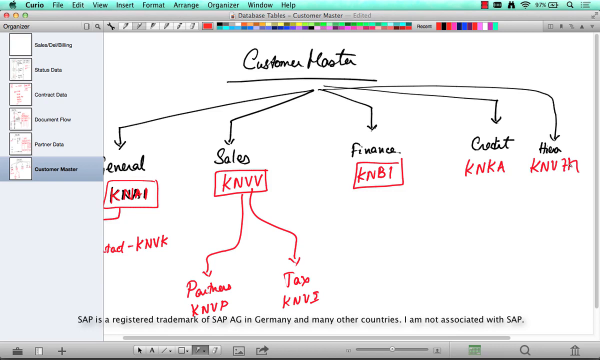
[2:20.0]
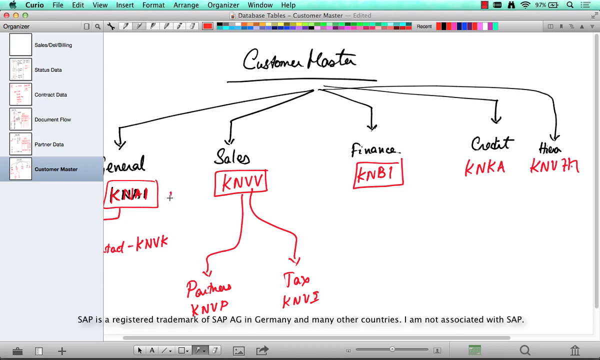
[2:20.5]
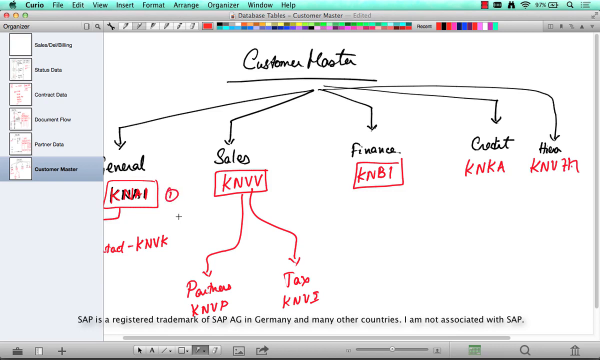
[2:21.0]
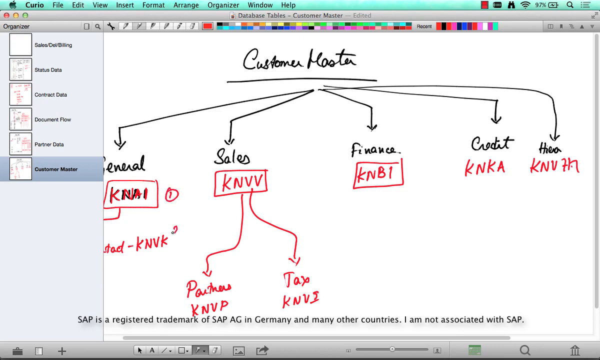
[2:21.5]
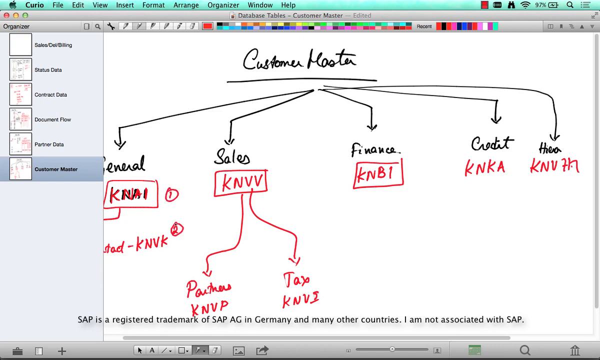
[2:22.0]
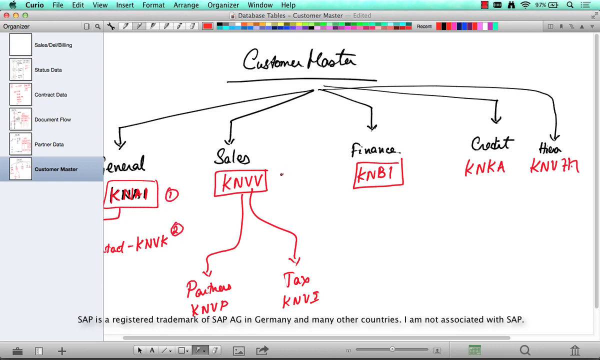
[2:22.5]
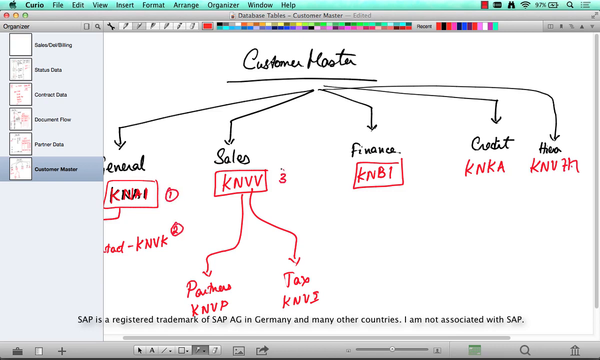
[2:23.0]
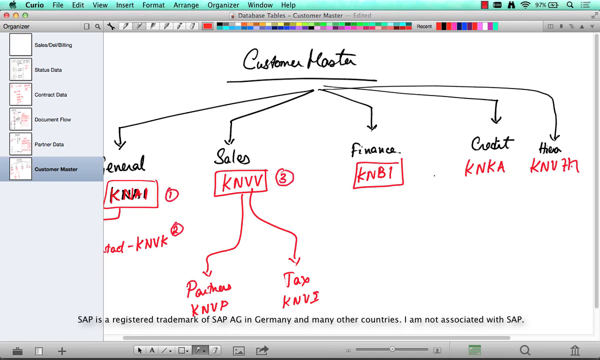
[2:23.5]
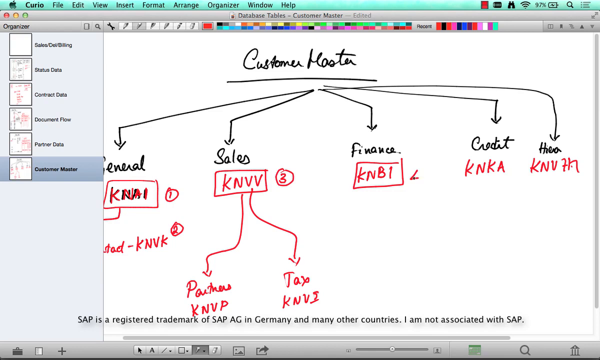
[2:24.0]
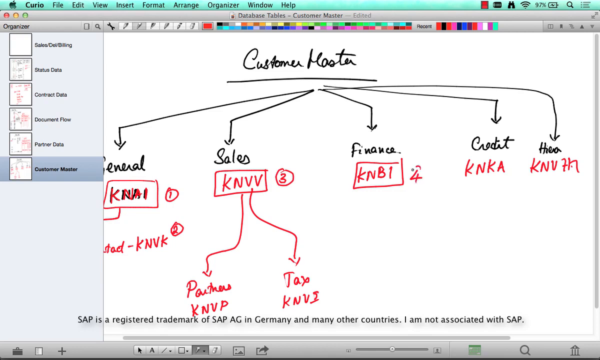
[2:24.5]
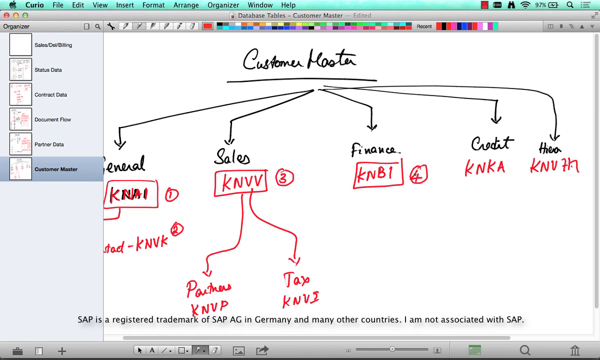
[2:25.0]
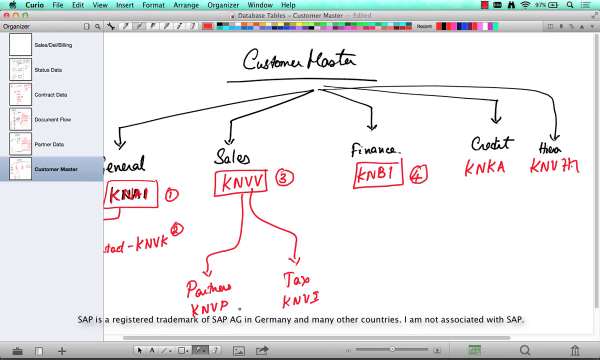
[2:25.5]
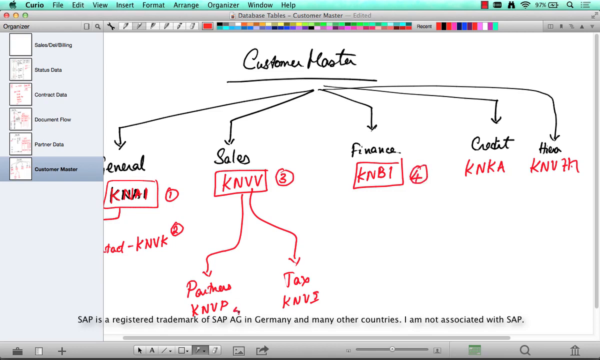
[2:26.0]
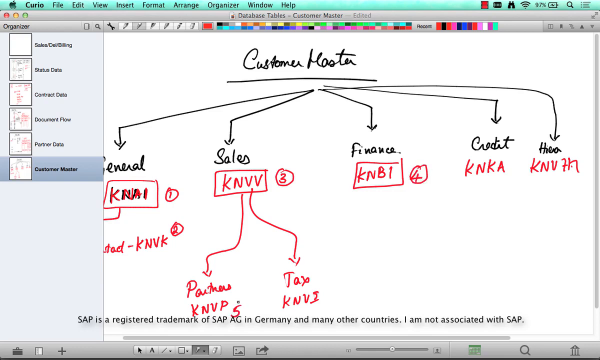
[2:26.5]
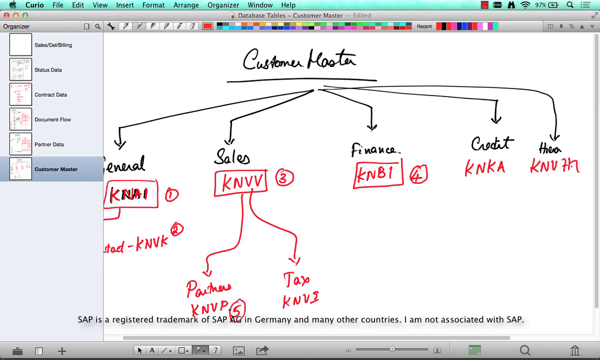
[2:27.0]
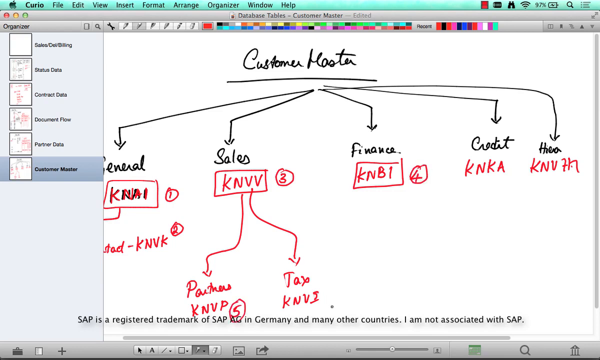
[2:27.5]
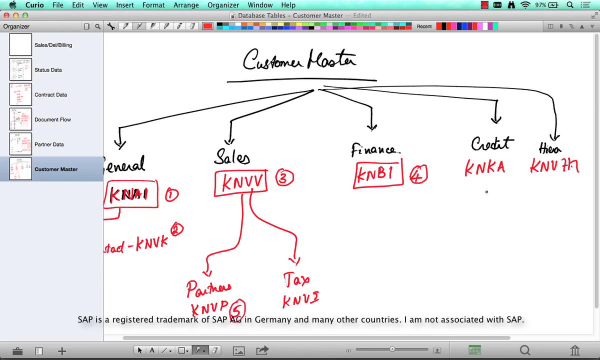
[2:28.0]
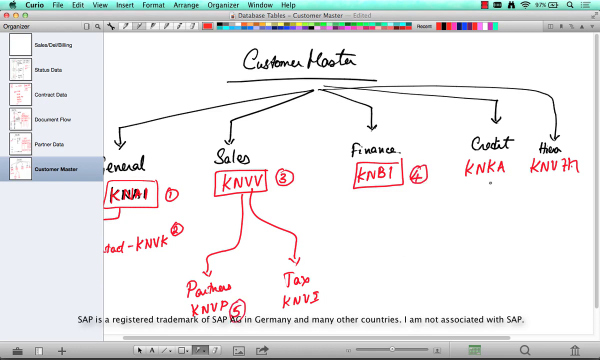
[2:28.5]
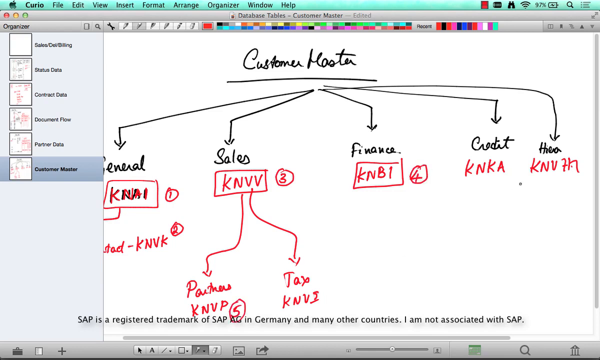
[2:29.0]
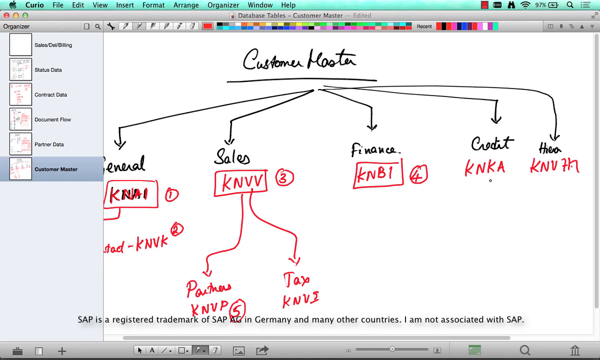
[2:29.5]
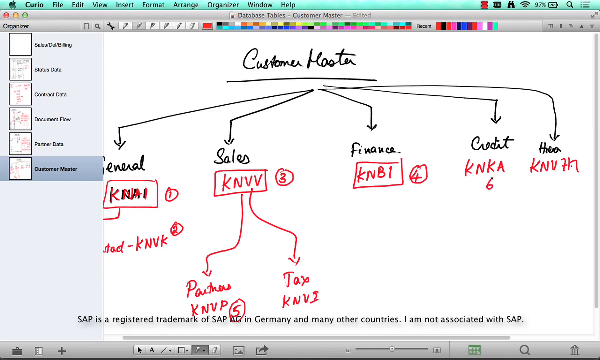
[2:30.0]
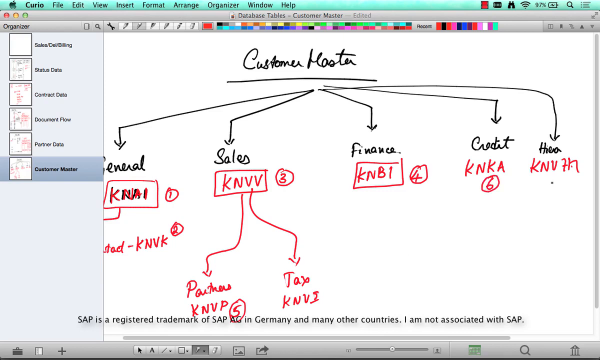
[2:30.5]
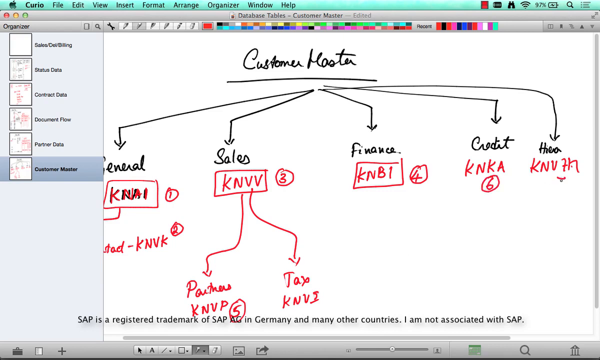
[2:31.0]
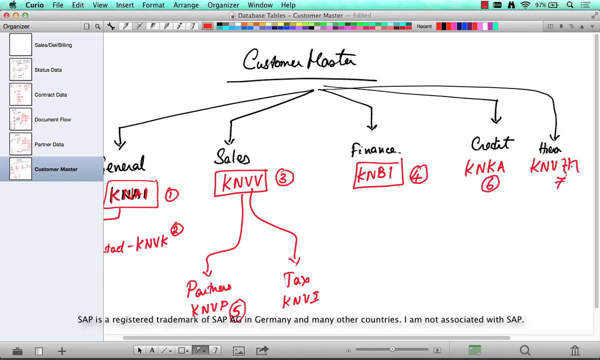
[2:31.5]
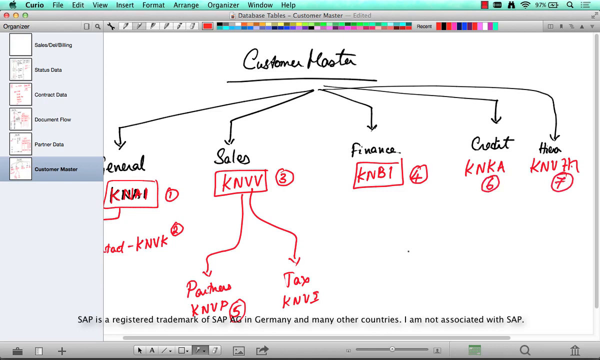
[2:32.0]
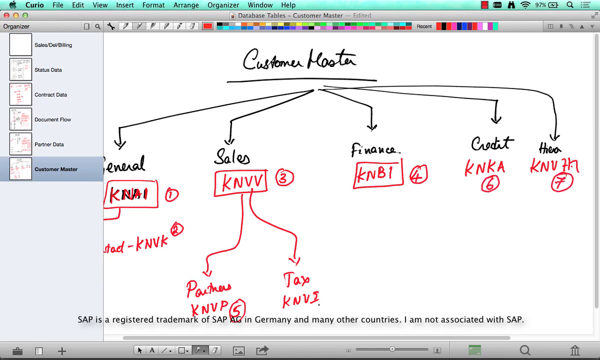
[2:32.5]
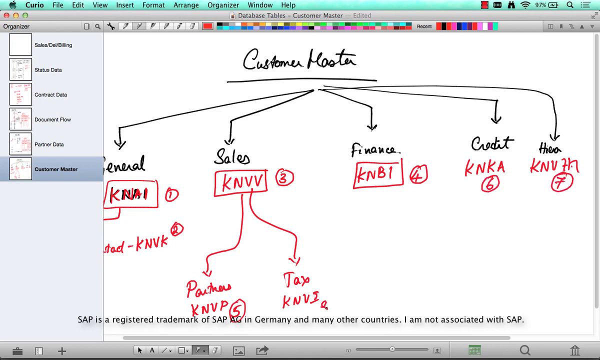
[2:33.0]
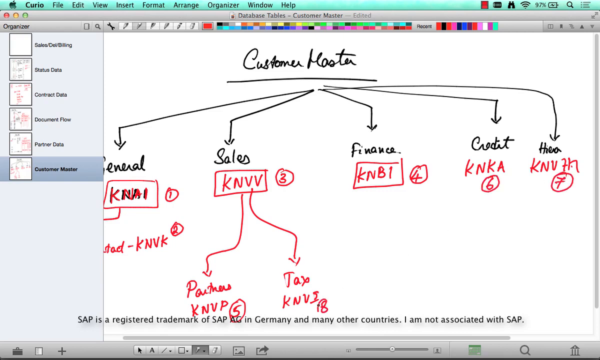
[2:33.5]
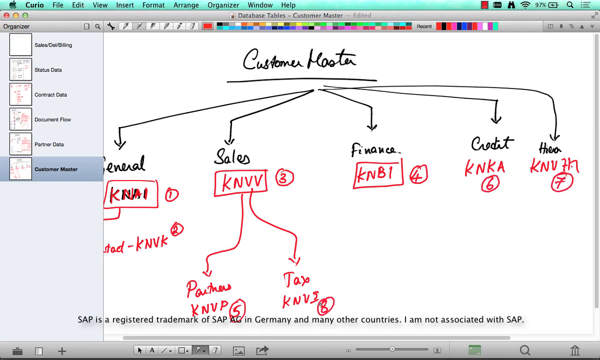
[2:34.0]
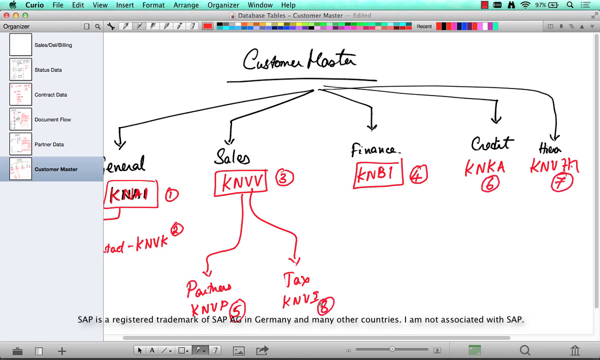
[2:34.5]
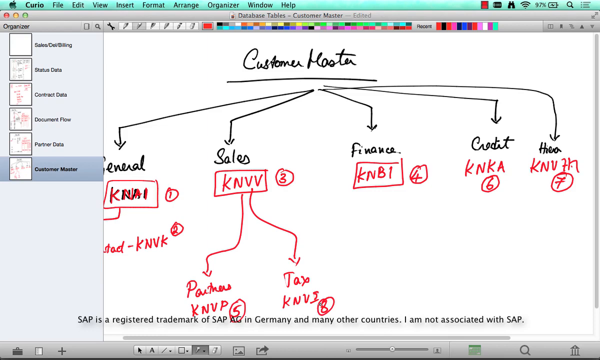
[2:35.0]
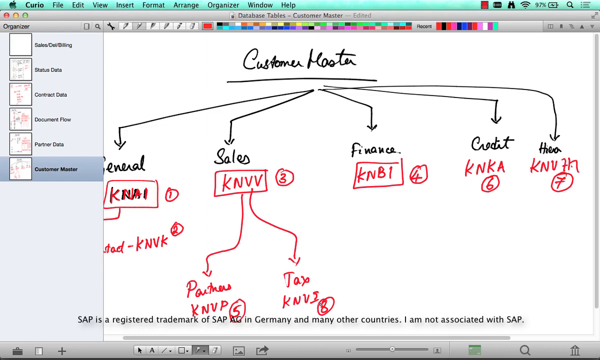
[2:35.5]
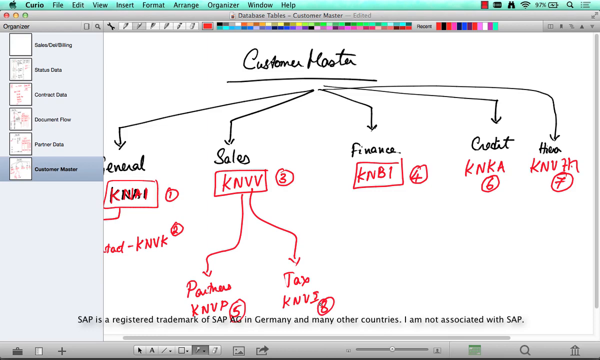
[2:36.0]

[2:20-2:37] Numbers are now added beside the red codes. Next to KNAI in its red box under general, a circled number one is written; below it, beside KNVK, a circled number two. Next to KNVV under sales comes number three, and under finance number four. Under sales, beneath KNVV, next to partner KNVP, a number five is written and circled, all in red. Under credit, next to KNKA, a circled number six is written; under HEA, number seven is written below KNVH7; and under tax, beneath sales KNVV, next to KNVI, the number eight is written and circled. At the very end the screen turns all white, and even the SAP disclaimer at the bottom disappears.